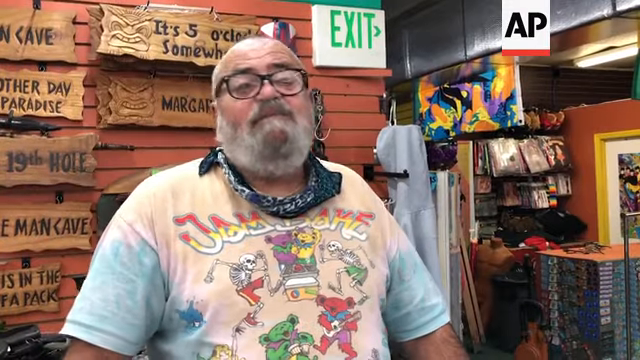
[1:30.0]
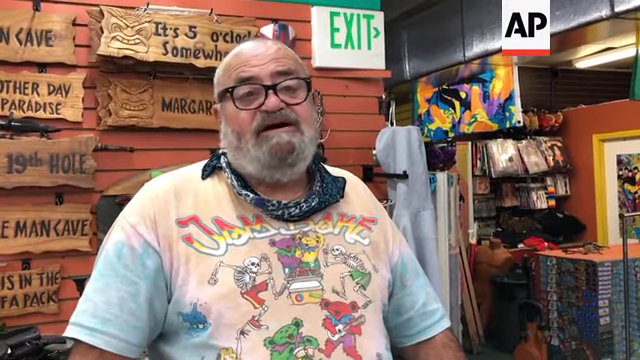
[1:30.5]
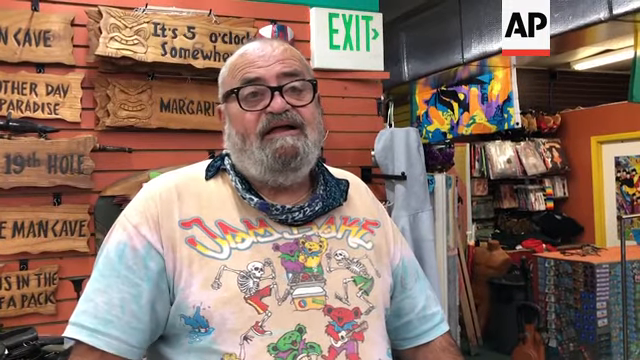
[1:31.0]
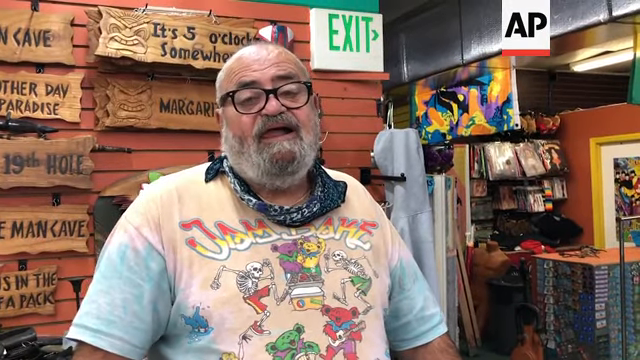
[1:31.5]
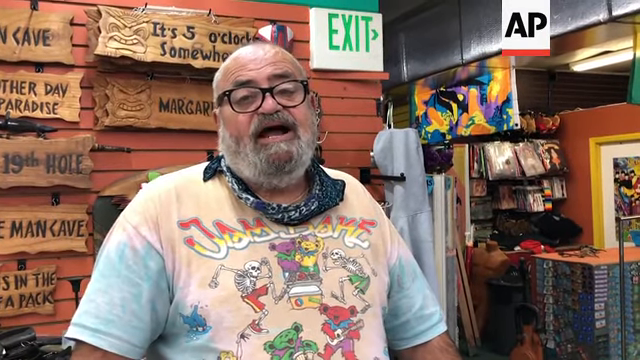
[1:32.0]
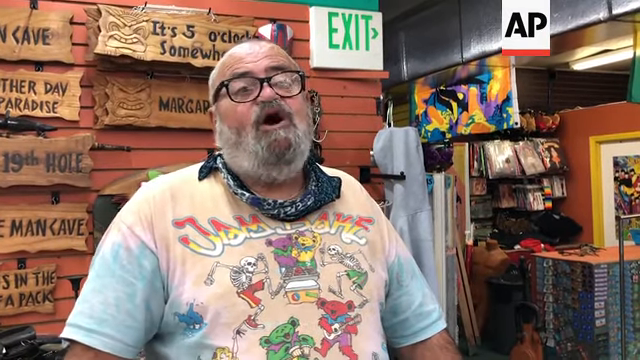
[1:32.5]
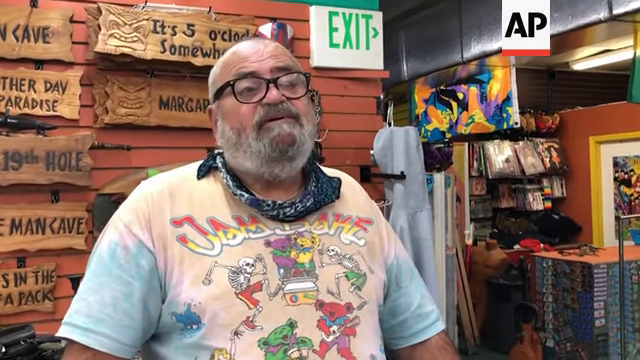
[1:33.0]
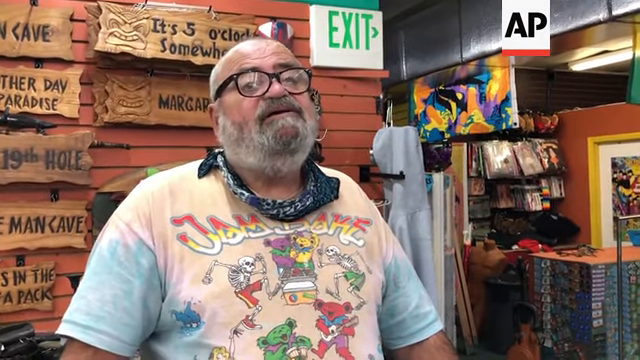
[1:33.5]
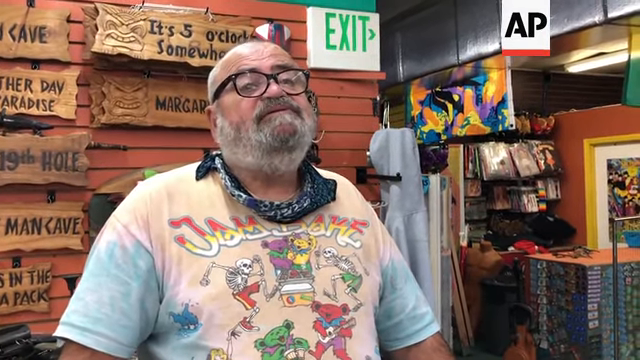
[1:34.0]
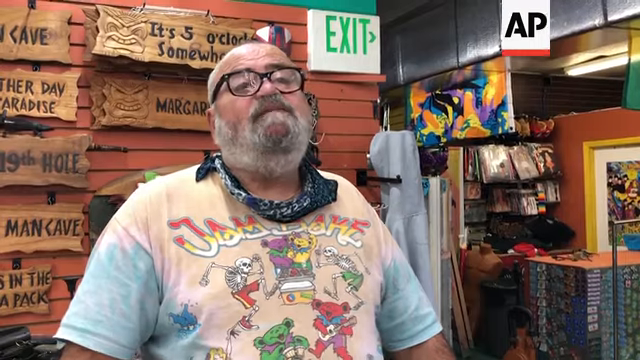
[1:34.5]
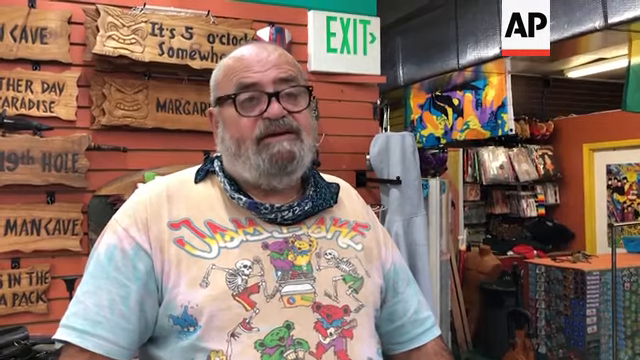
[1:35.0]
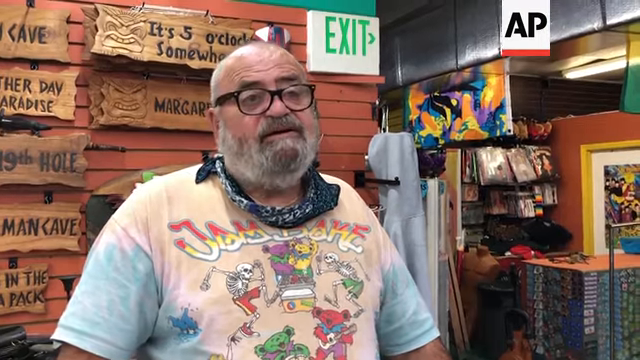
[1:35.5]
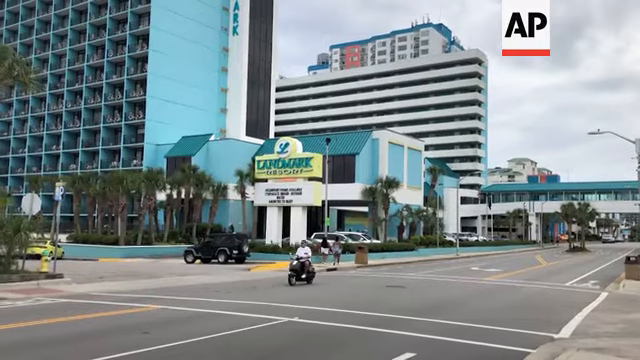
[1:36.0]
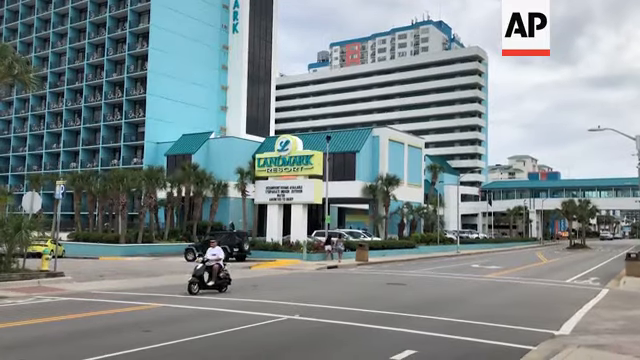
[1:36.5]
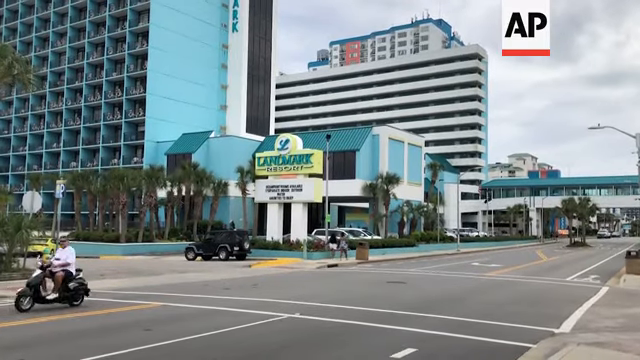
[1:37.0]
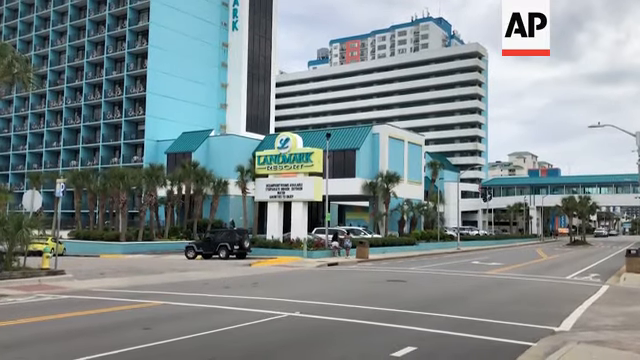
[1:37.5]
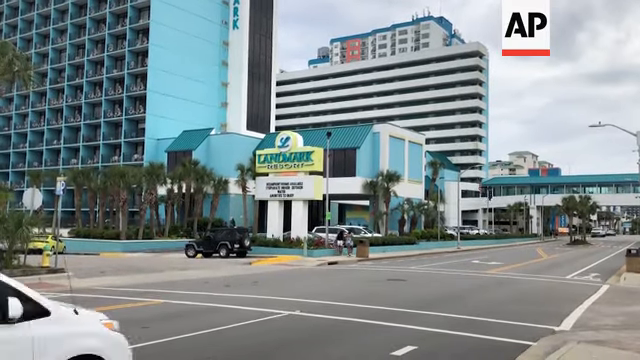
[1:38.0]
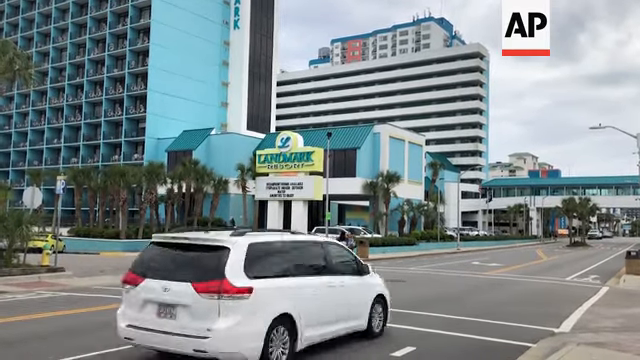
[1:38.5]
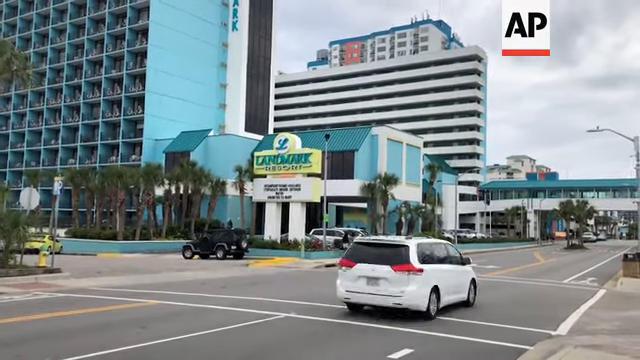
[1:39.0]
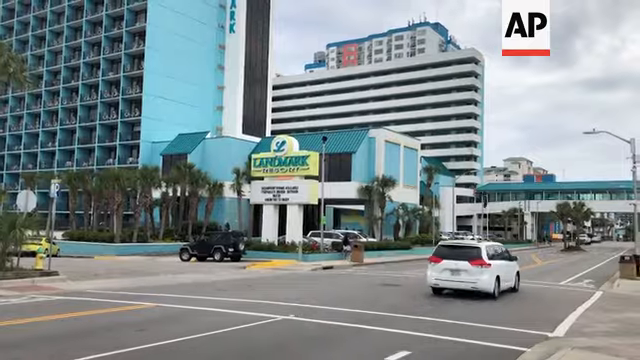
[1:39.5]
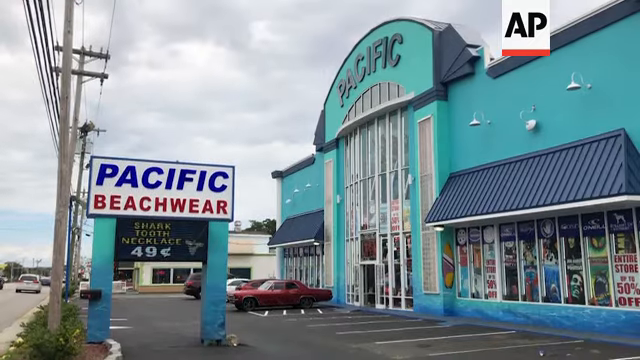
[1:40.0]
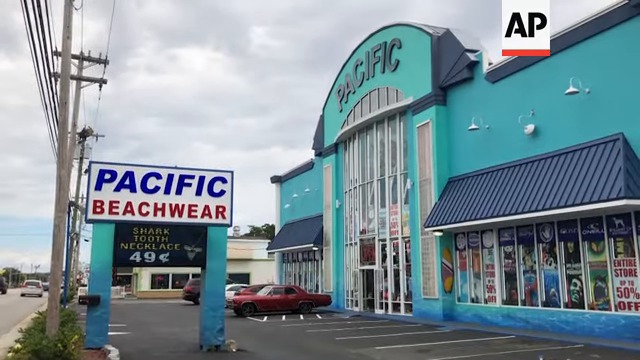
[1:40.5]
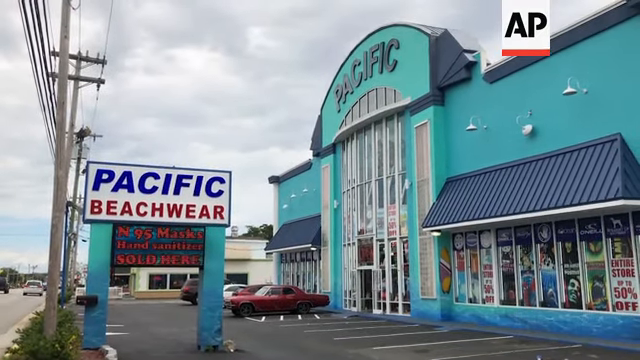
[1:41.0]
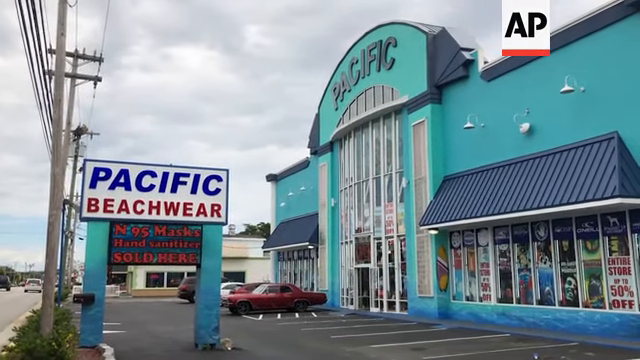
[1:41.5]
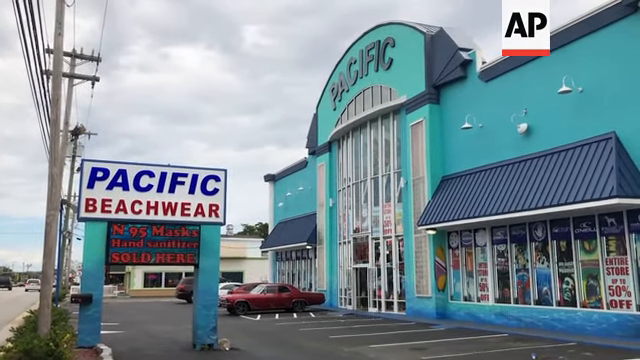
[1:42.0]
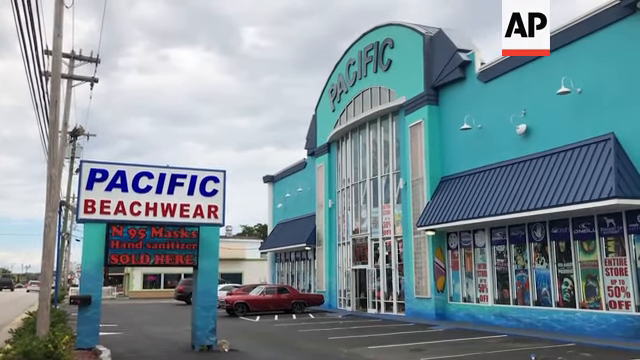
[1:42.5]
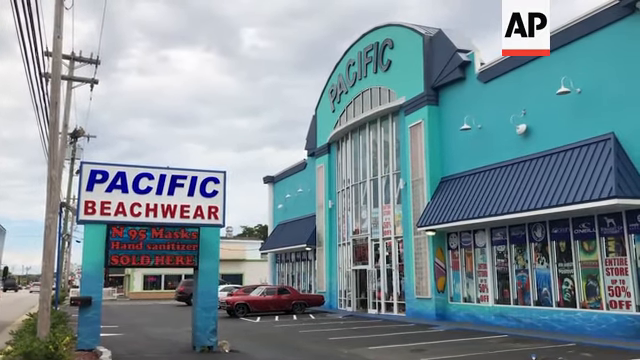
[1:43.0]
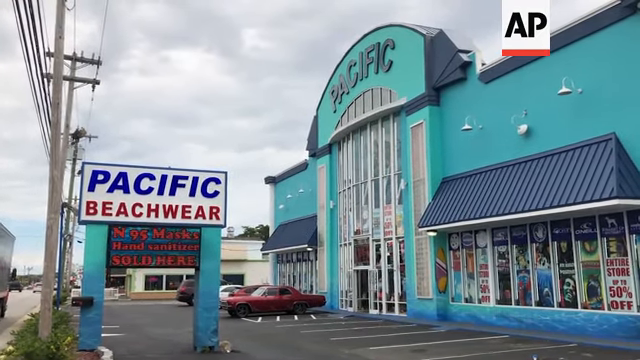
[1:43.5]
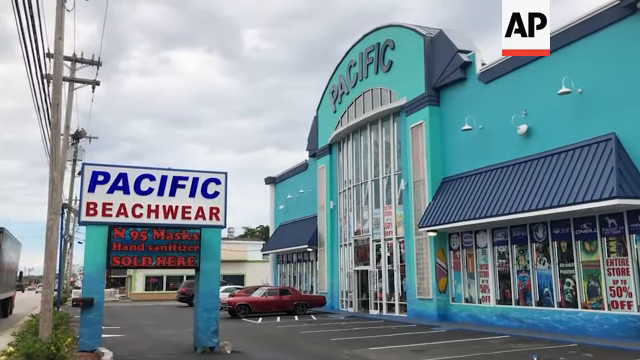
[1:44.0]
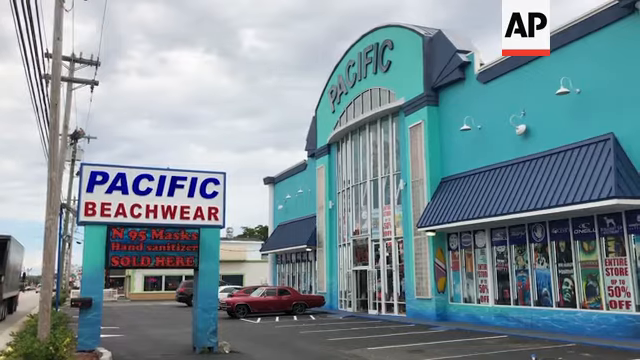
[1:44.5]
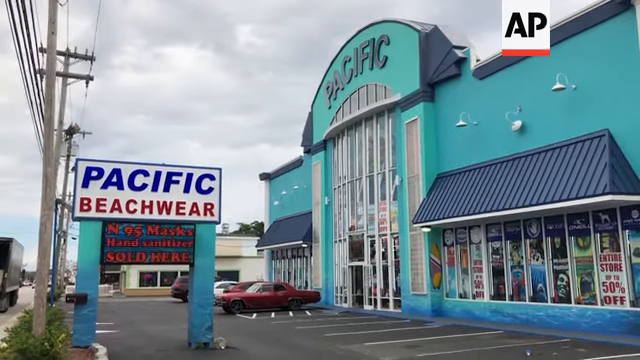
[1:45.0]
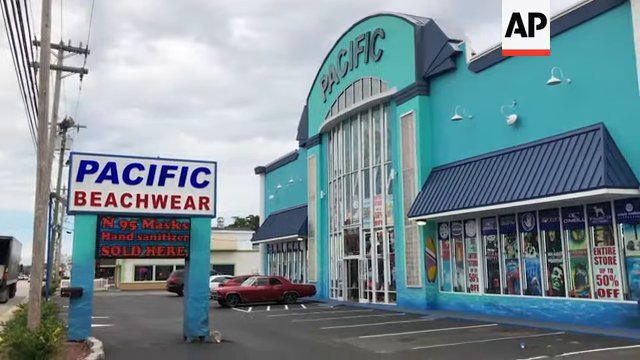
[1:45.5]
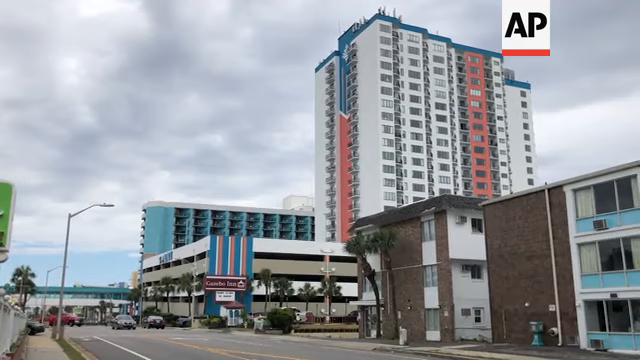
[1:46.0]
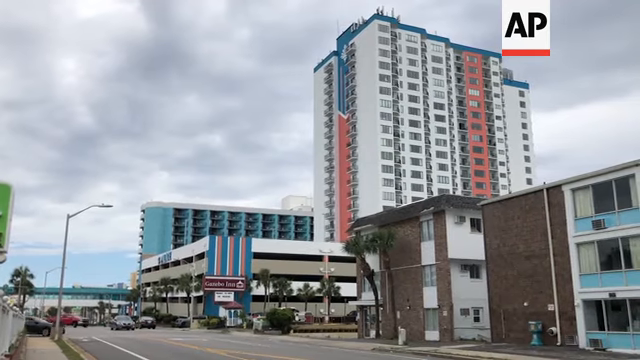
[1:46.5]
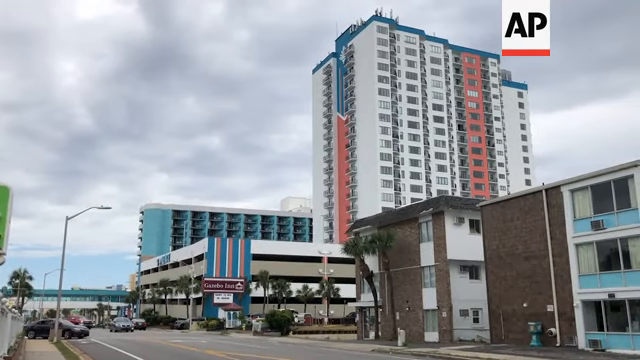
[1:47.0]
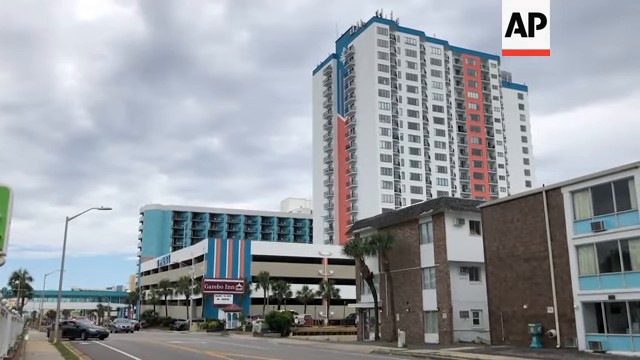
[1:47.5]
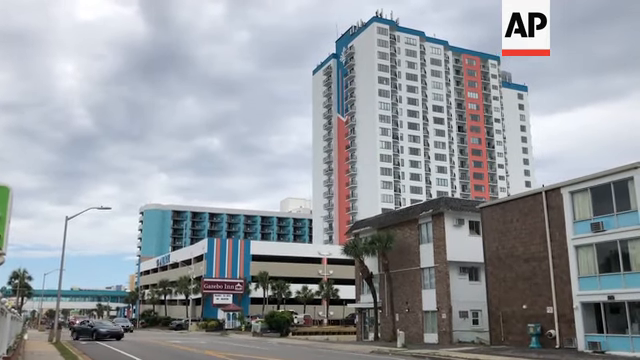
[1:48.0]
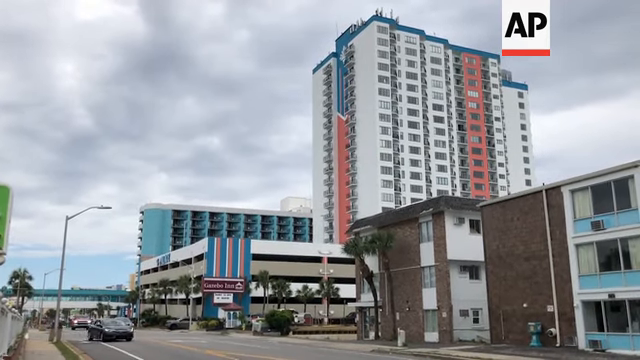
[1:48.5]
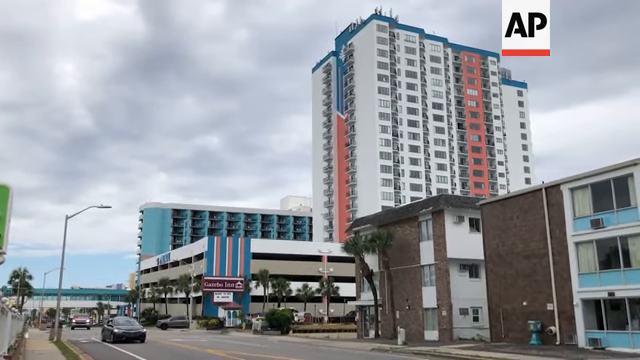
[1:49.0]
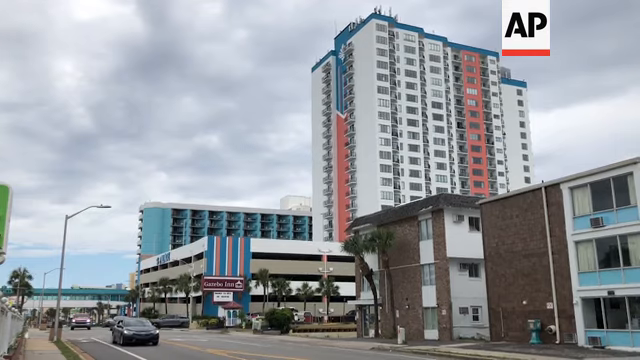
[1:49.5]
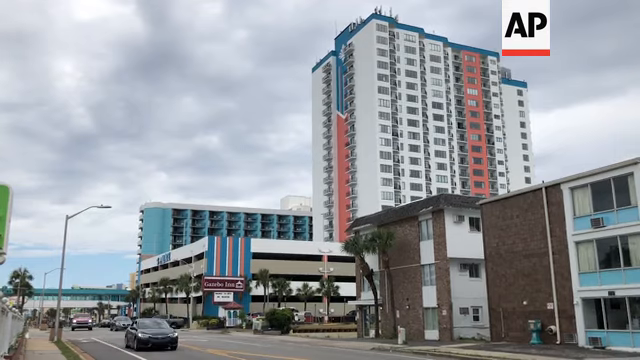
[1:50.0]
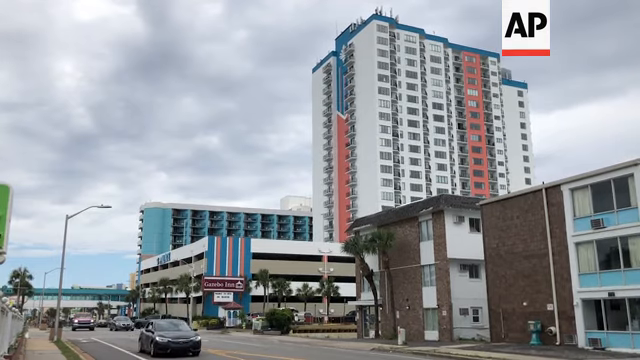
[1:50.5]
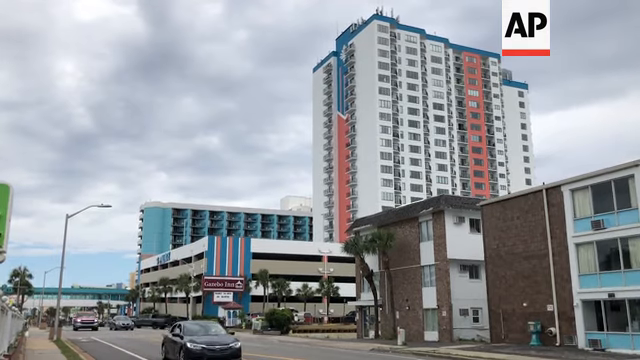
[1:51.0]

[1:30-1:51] A man is talking; he may possibly be a shop owner. He has a blue neckerchief around his neck and wears a multicoloured tie-dyed t-shirt with skeletons dancing around it. He wears glasses, is bald and has a gray beard. Next, cars pass along a street that looks very empty, with not much traffic. The video switches to Pacific Beachwear, where signs are out advertising sales, and trucks pass by. Another shot shows a high-rise building, possibly a hotel or some type of condominium. The sky is overcast and gray, with a little bit of blue in the background, but it is not particularly sunny.